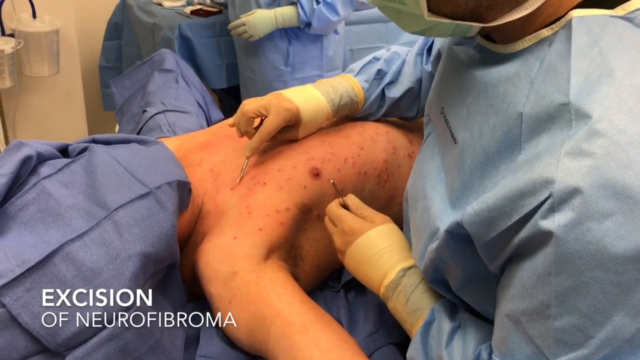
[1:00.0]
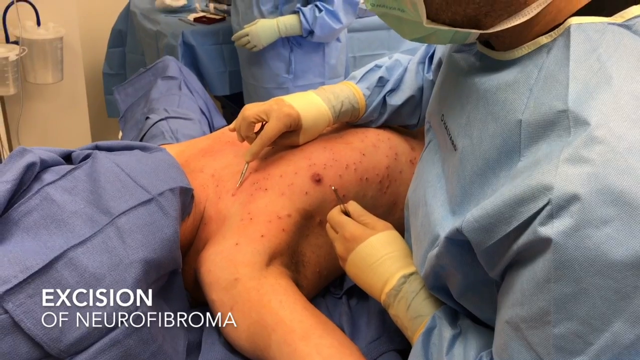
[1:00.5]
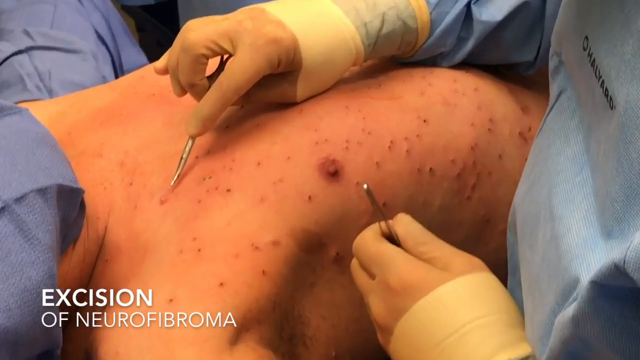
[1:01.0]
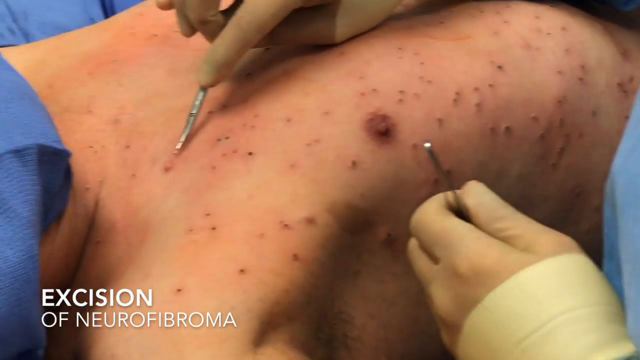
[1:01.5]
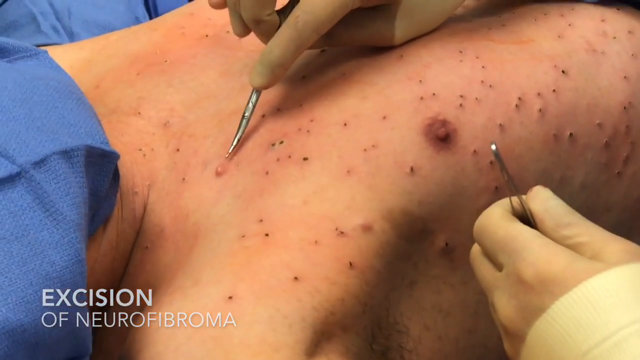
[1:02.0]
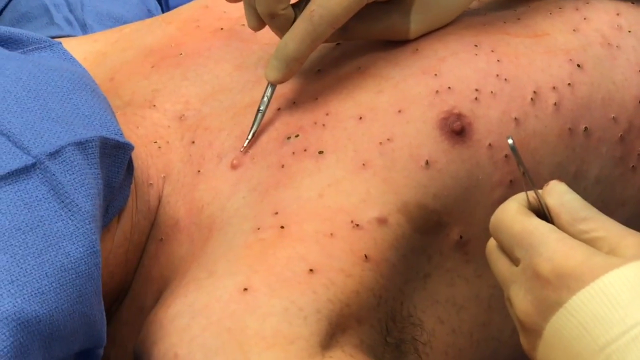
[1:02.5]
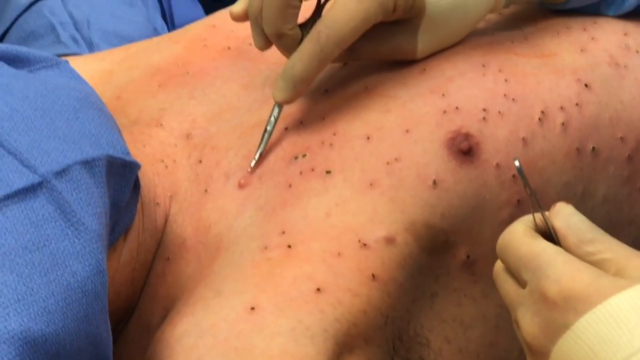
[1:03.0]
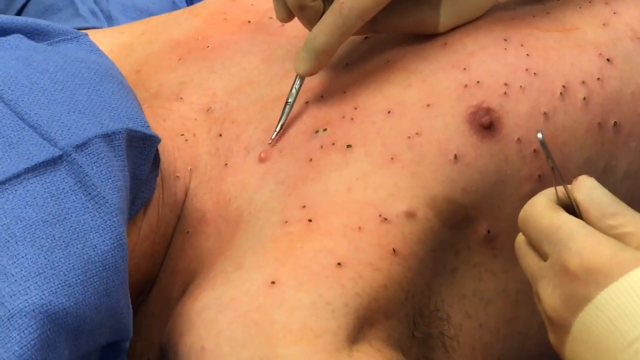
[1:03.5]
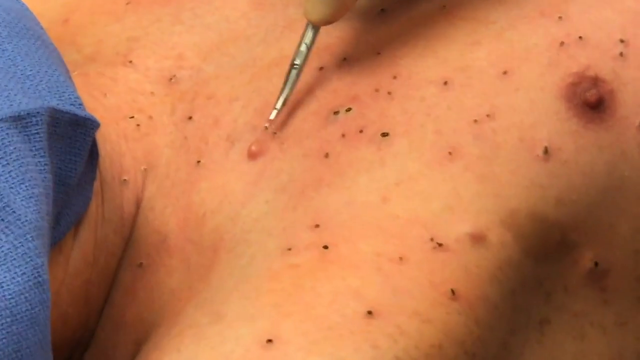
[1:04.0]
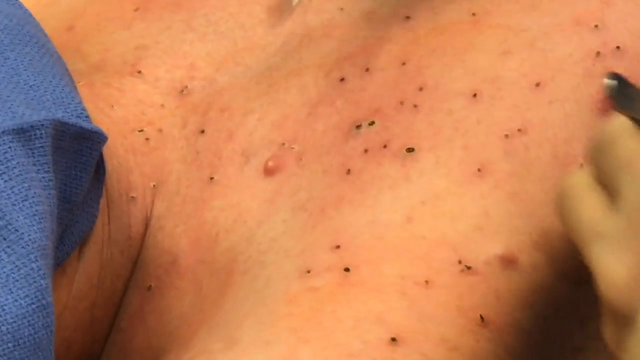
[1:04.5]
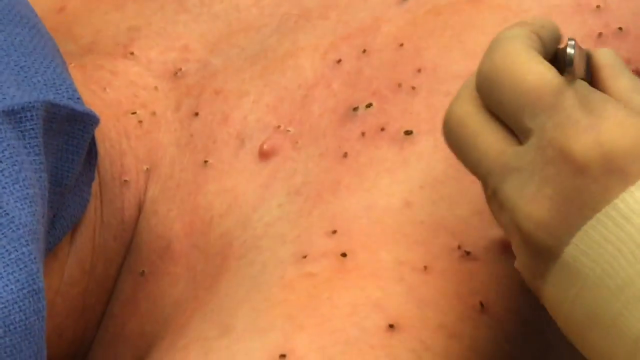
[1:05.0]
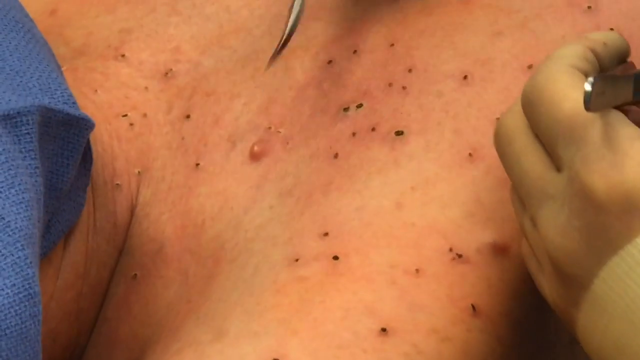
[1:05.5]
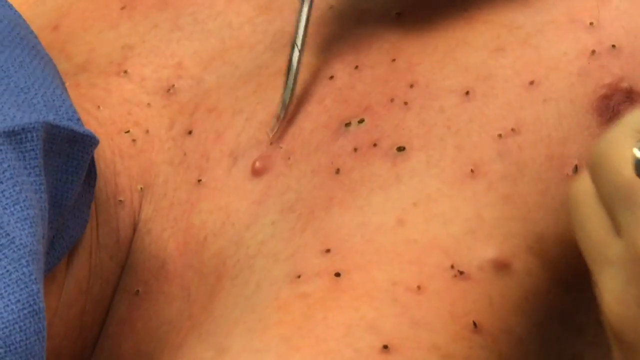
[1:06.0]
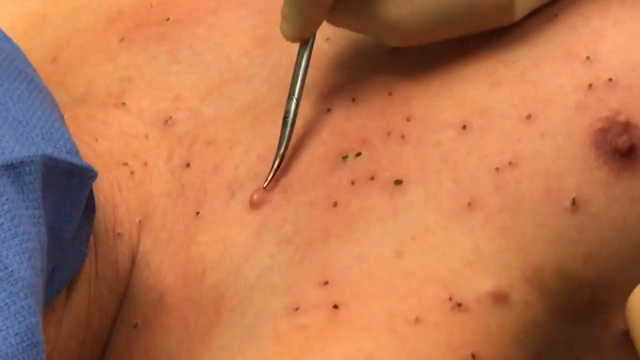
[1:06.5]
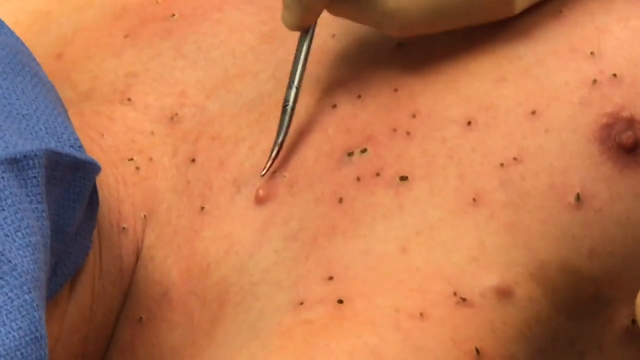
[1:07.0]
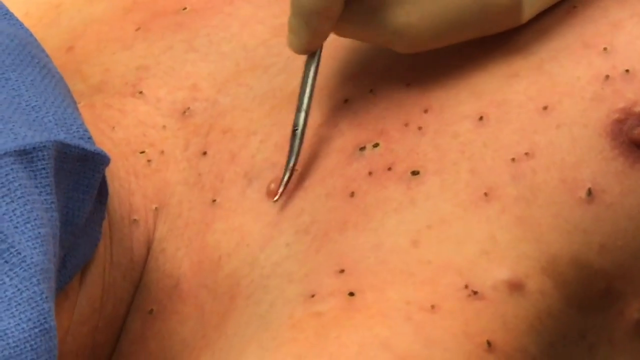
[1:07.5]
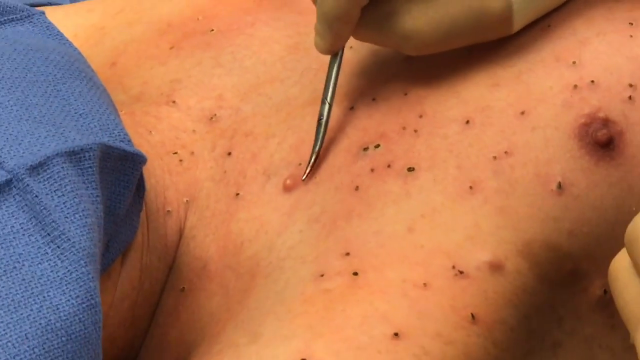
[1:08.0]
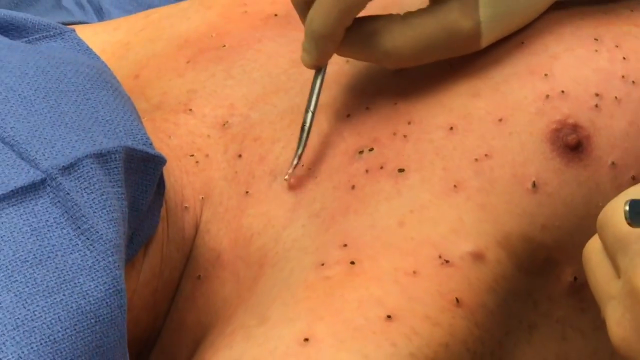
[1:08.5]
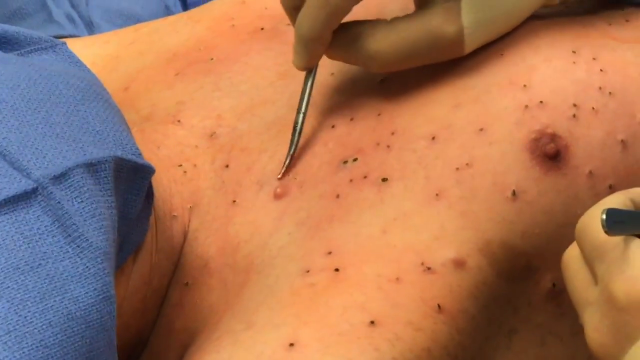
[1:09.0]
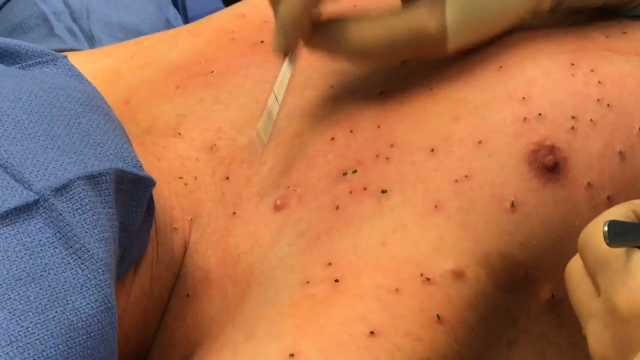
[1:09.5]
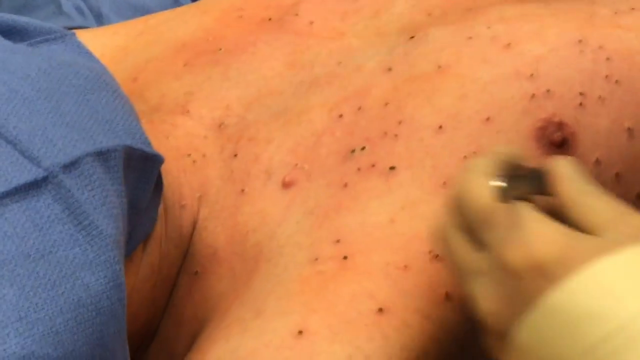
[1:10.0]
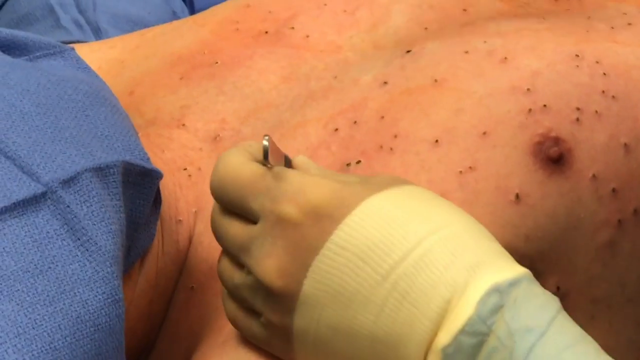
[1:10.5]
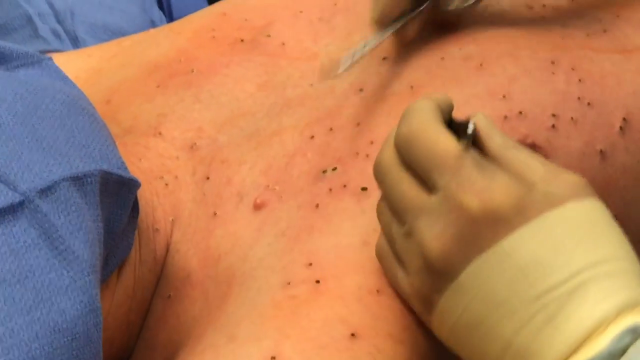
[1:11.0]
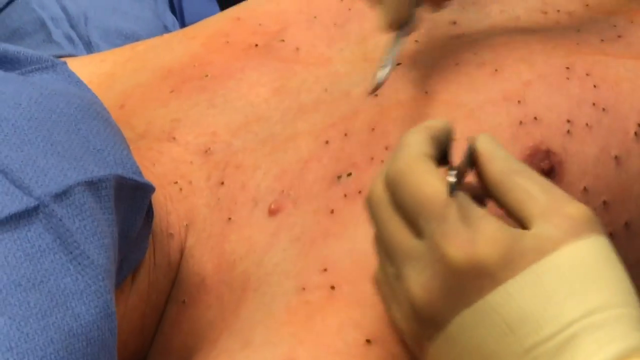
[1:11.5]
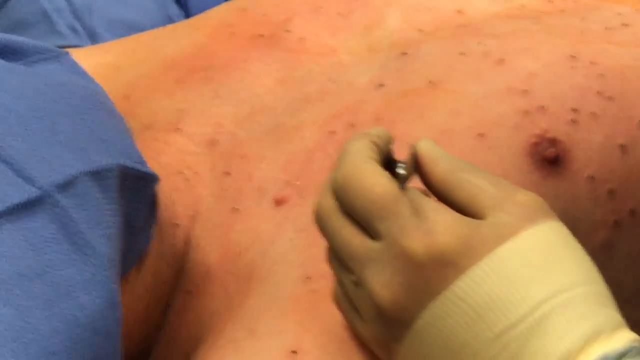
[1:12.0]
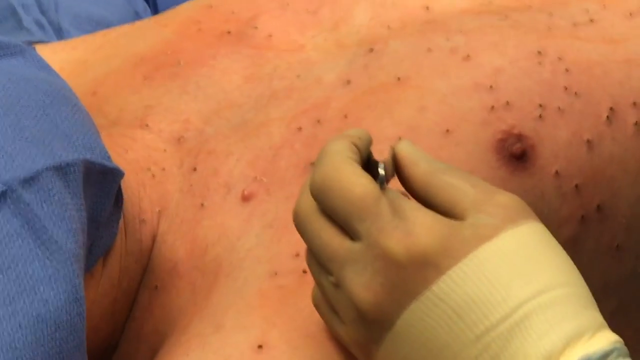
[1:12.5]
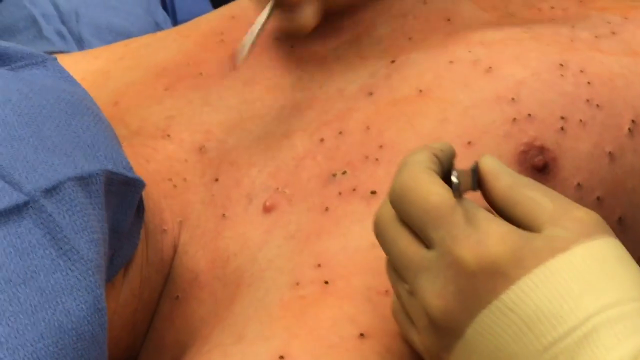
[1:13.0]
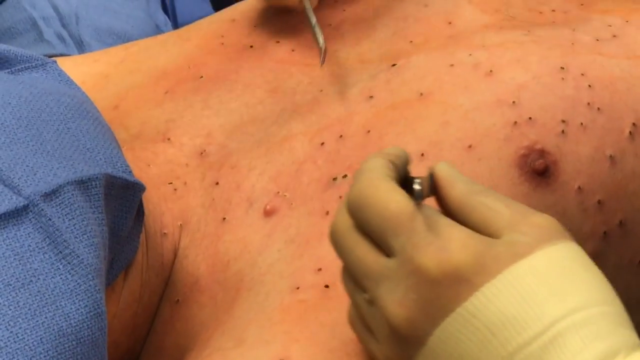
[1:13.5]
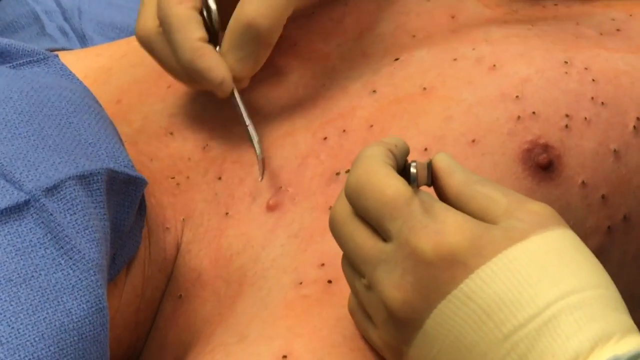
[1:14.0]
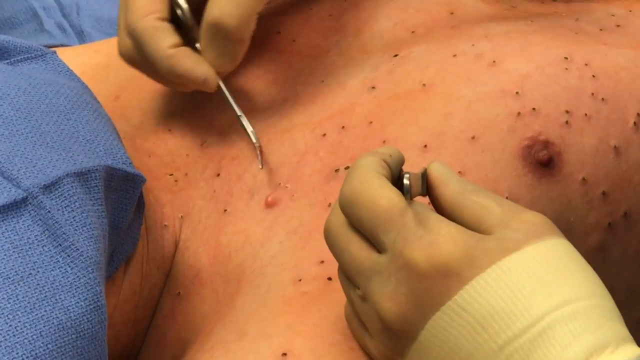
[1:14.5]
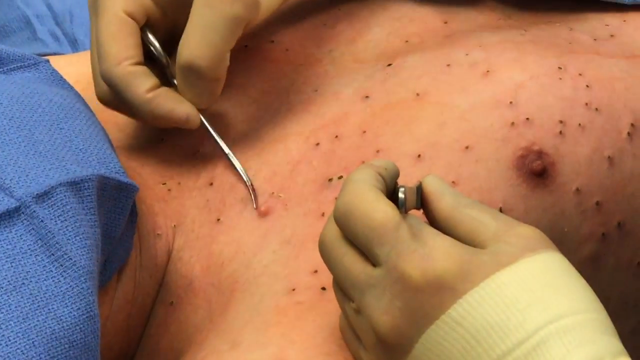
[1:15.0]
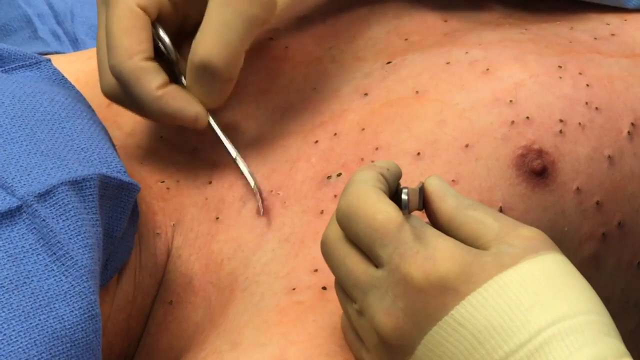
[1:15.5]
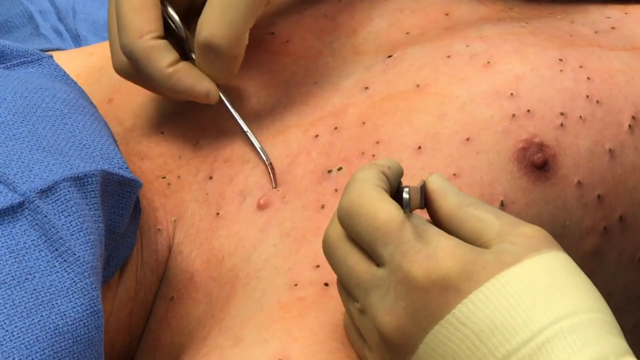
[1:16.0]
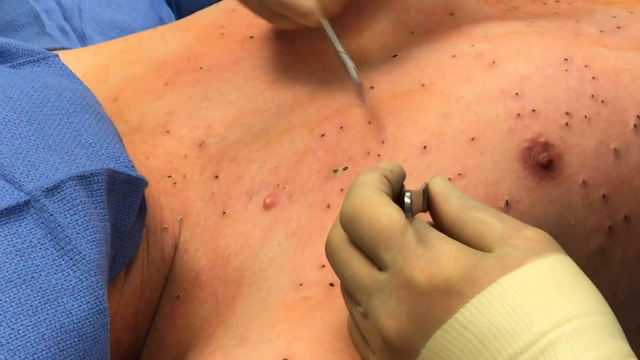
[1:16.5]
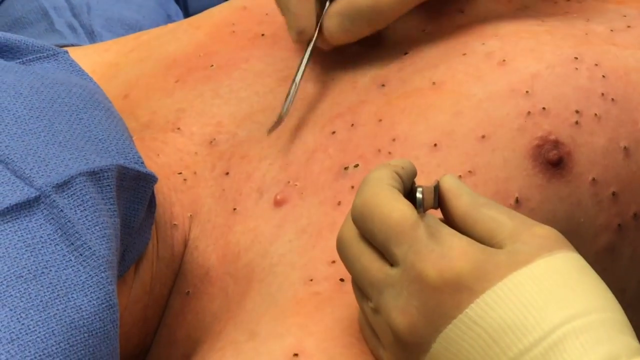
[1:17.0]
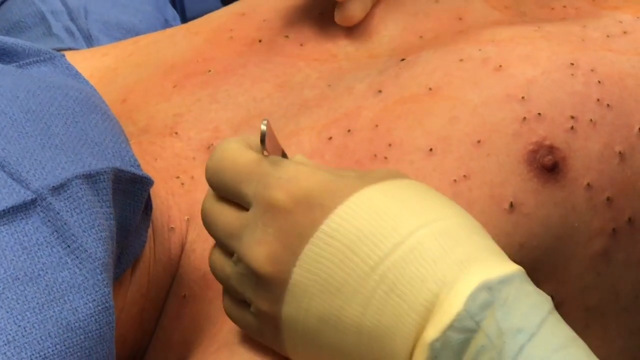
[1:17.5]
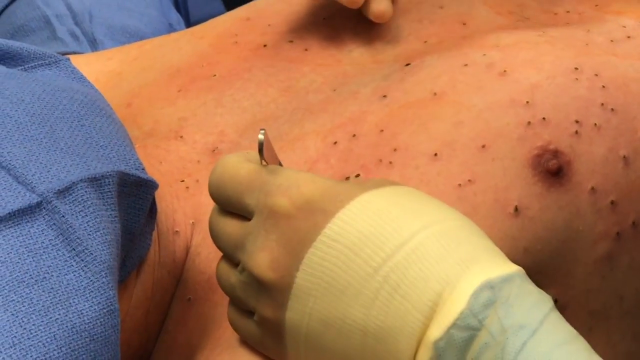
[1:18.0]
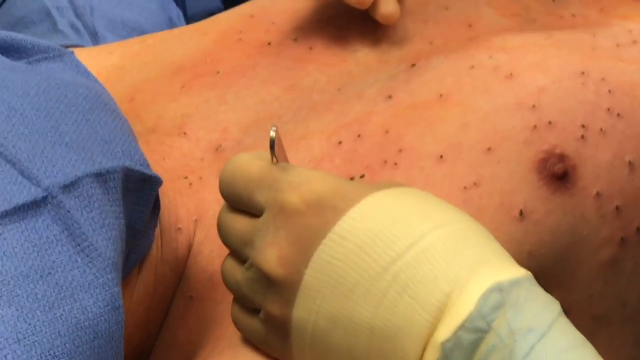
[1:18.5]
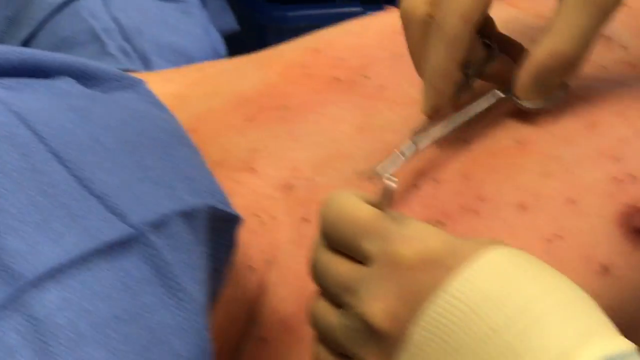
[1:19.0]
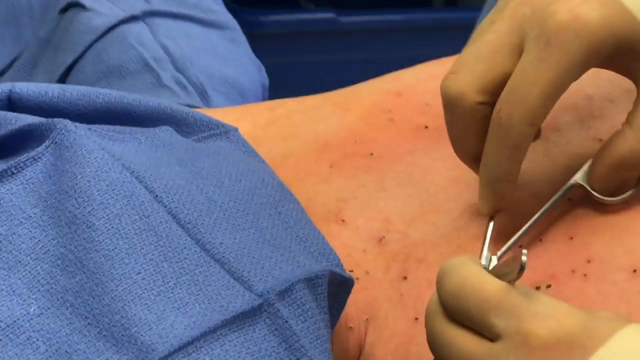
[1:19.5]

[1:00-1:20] The doctor works to remove multiple neurofibromas, holding surgical tools in each hand and working mainly on the upper right chest around the breast and up to the collar of a Caucasian male patient, who appears to be asleep, with his face covered by blue surgical sheeting. The doctor excises each individual neurofibroma. In the right hand is a hook-type instrument that looks like surgical scissors, and in the left hand are surgical tweezers. The doctor points to a larger neurofibroma with the scissors in his right hand, circles it, and goes at it with the tweezers in his left hand. Both hands are in white nitrile gloves, and the doctor wears a blue surgical gown and a white surgical mask. An assistant in the background also wears a blue surgical gown and white nitrile gloves pulled up over the edges of the gown sleeves. Many spots on the patient's right torso, from the shoulder down to the hip line, have been burned out with a small tool. The patient's right arm is extended out and slightly up, giving access to his side, and his right nipple and areola are visible. In the background are a blue surgical gown and surgical tabling covered with blue sheeting, with multiple surgical implements on top such as gauze, tweezers and scalpels. The wall behind is off-cream. The patient's left arm appears to be extended out from his side as well and is covered with blue surgical sheeting. The patient is lying on blue surgical sheeting. At the bottom, white text reads "excision of neurofibroma".